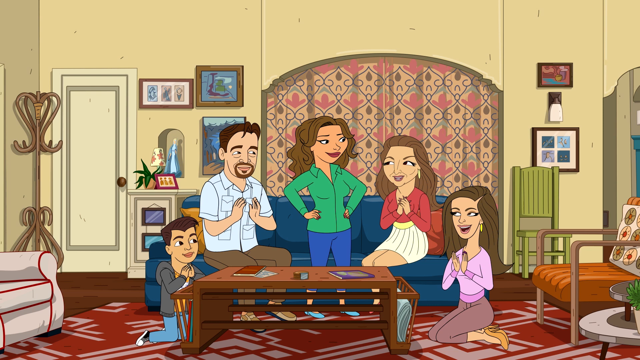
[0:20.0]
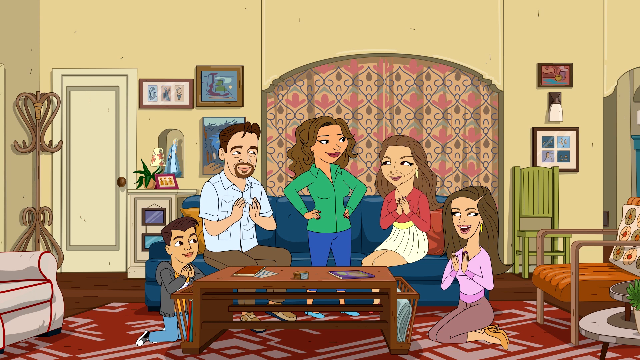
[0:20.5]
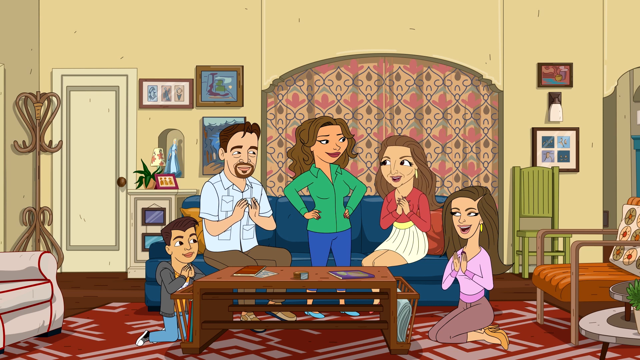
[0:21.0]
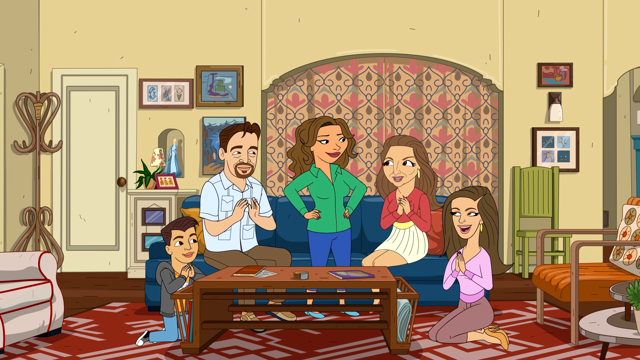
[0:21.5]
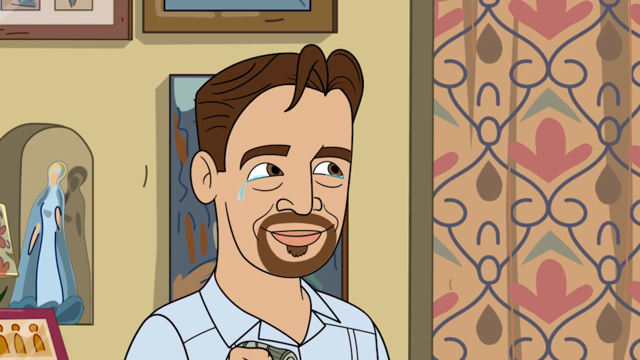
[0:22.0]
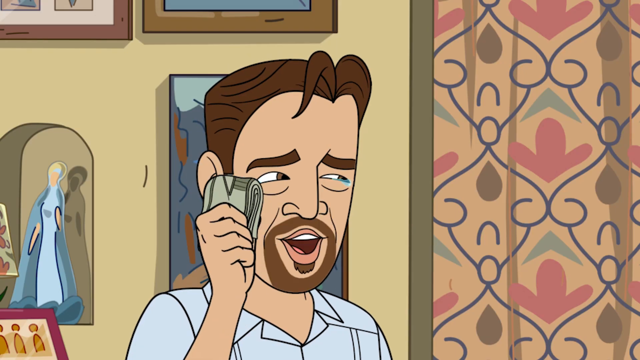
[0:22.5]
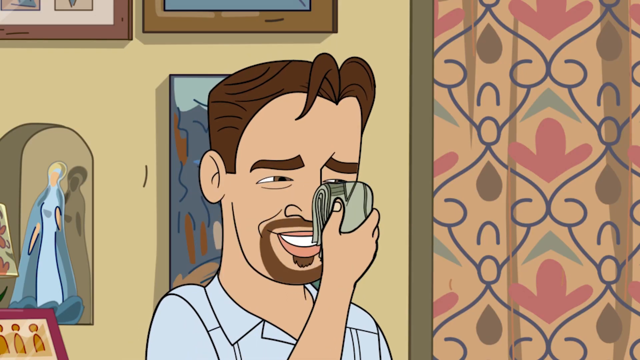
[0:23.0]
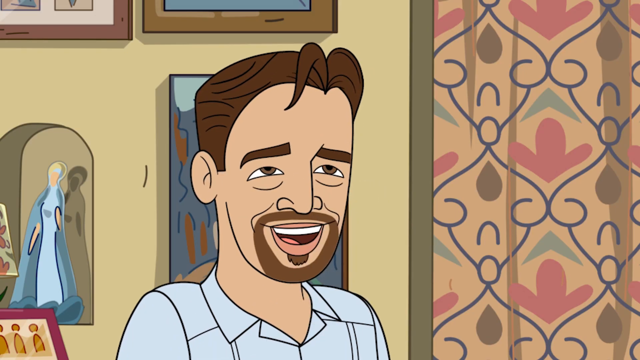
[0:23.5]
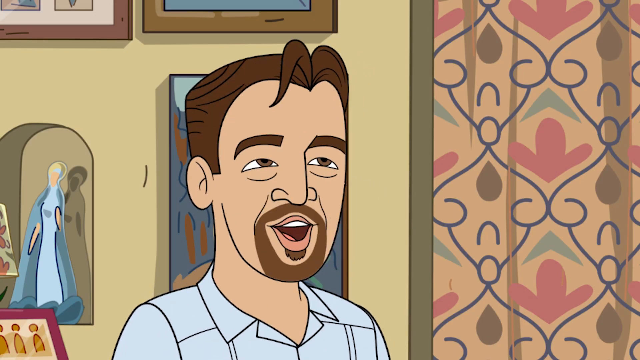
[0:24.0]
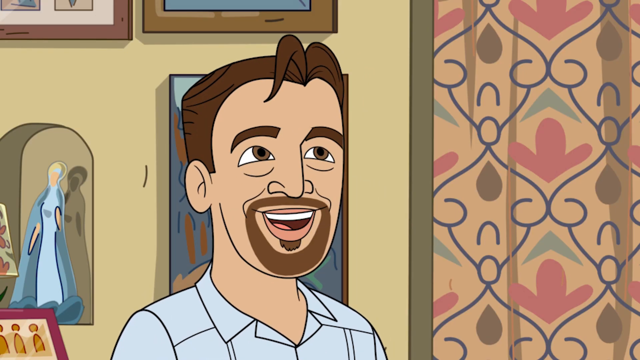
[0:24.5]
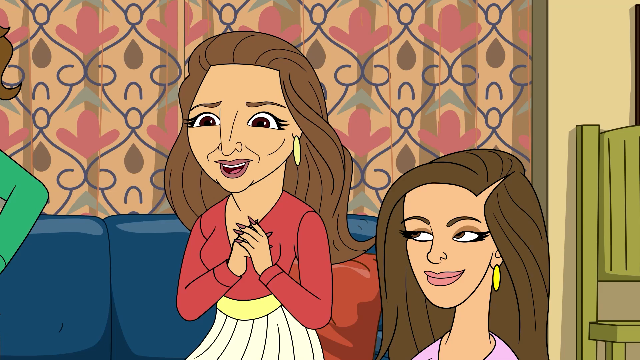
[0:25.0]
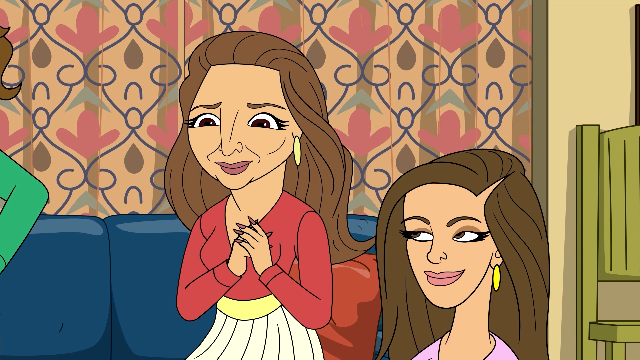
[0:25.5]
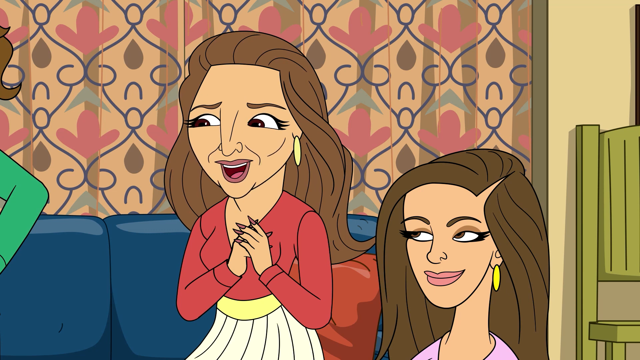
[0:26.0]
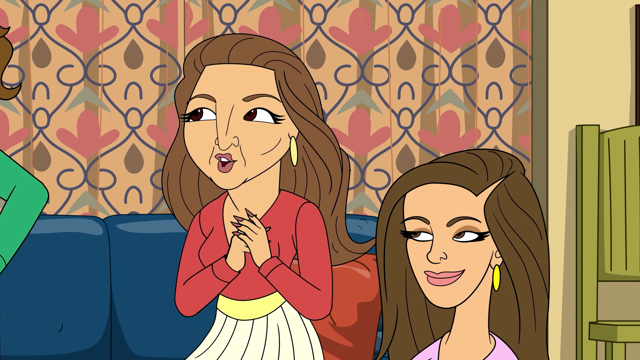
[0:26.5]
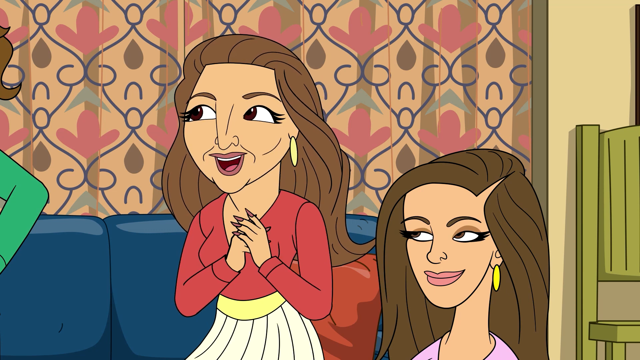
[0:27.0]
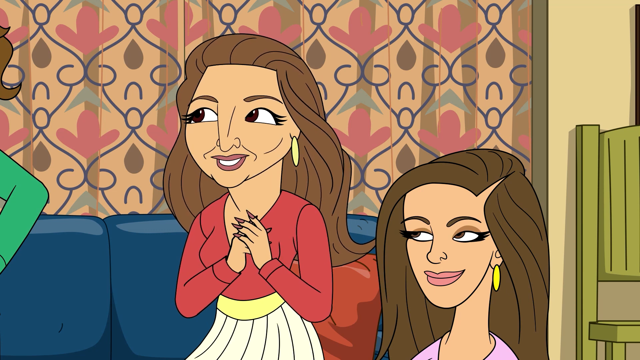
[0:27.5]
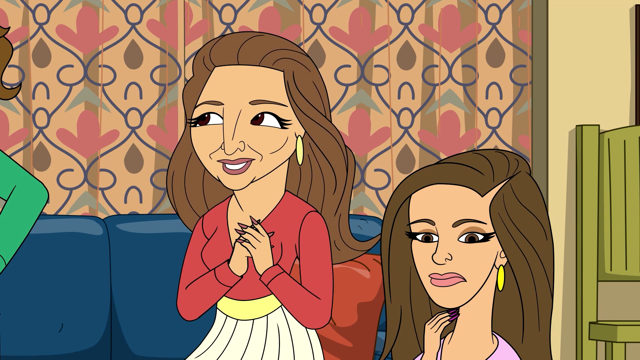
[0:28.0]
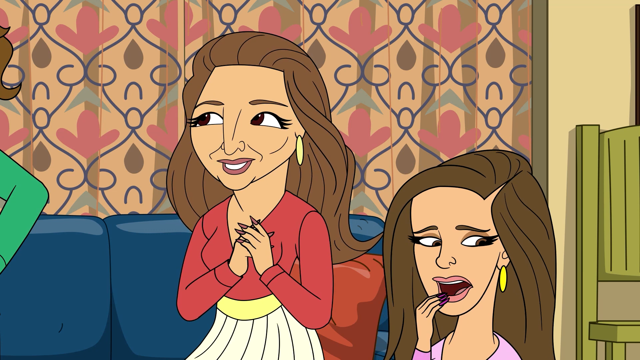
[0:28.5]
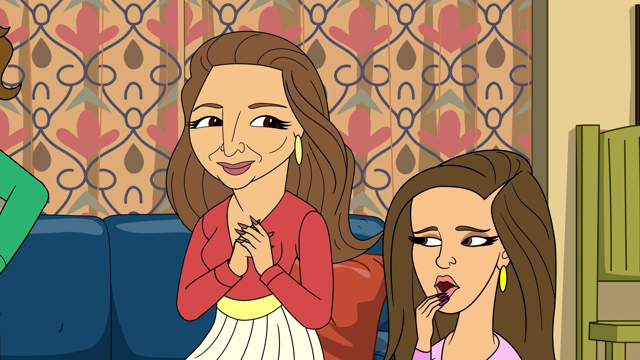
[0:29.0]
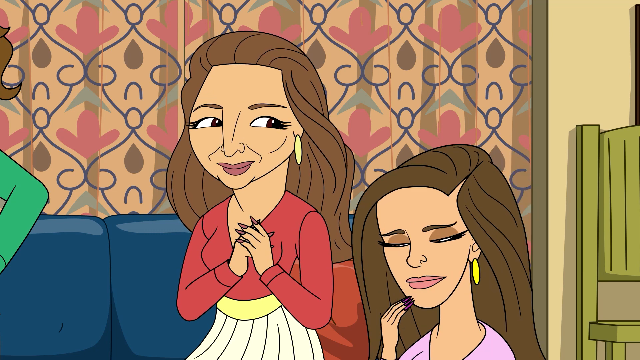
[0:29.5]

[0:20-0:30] What looks like a family of five people appears in the same room. A young boy with short brown hair and a greyish sweater is on the floor. A lady with long hair wearing a pink or purple t-shirt is also sitting on the floor. On a blue couch is a lady with long brown hair wearing a reddish top with a short skirt. In the middle, a lady with long brown hair in a green long-sleeve shirt and blue pants is standing between the lady and the guy. The guy wears a white short-sleeve shirt and brown pants and has short brown hair. The guy speaks, then wipes himself with some sort of cloth, and the ladies reply. The people keep clapping. The lady on the floor and the lady sitting on the couch are wearing yellow earrings. Apart from the conversation and the clapping, not much happens. There are no words or titles on the screen, and there is little movement other than zooming in and zooming out. There are no animals. There are many pictures on the walls and furniture around the room.